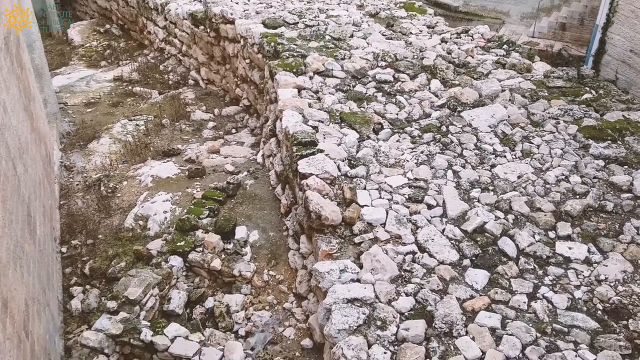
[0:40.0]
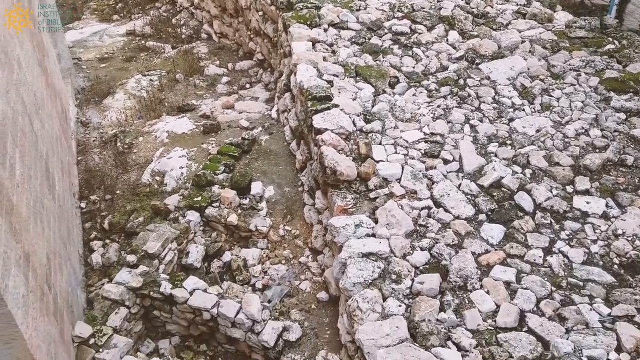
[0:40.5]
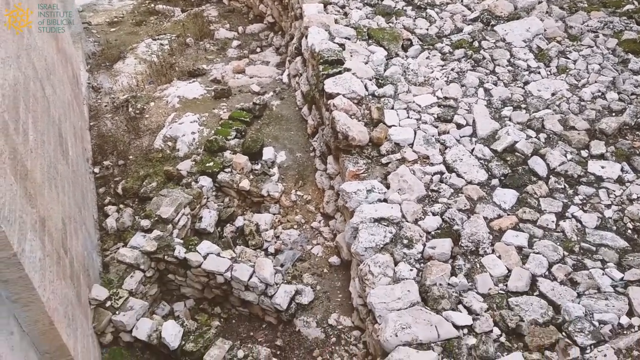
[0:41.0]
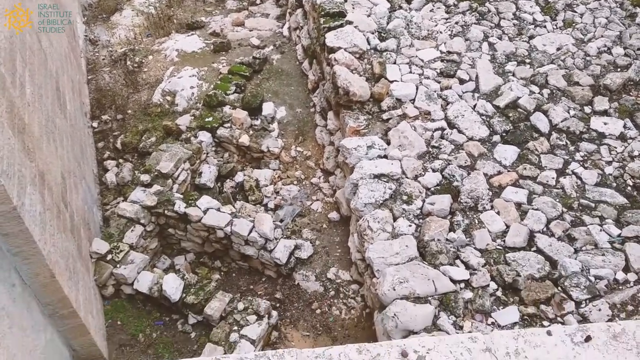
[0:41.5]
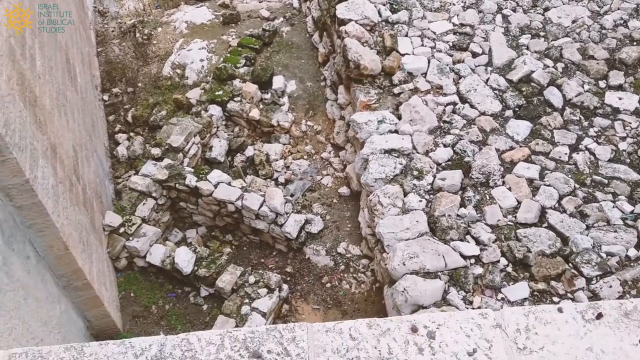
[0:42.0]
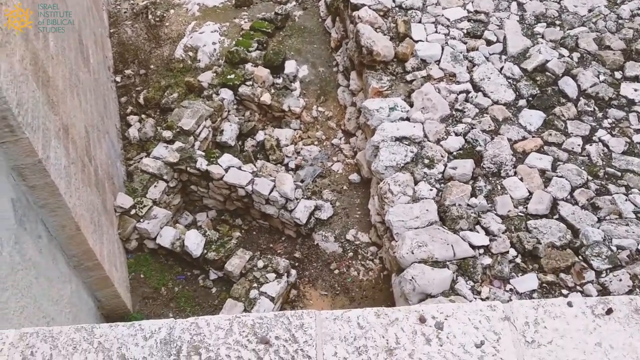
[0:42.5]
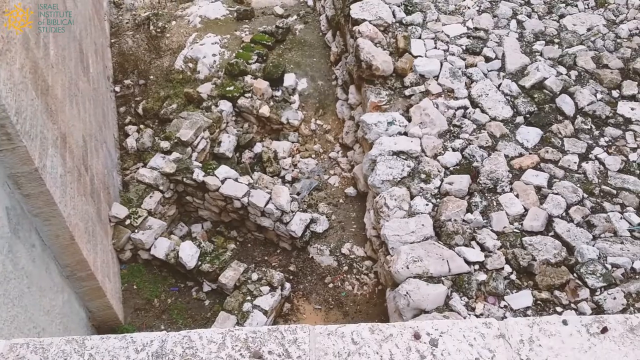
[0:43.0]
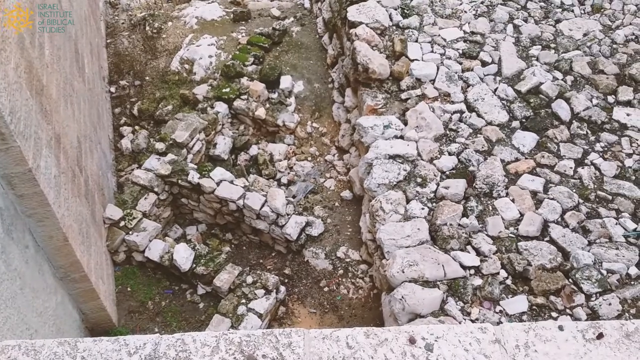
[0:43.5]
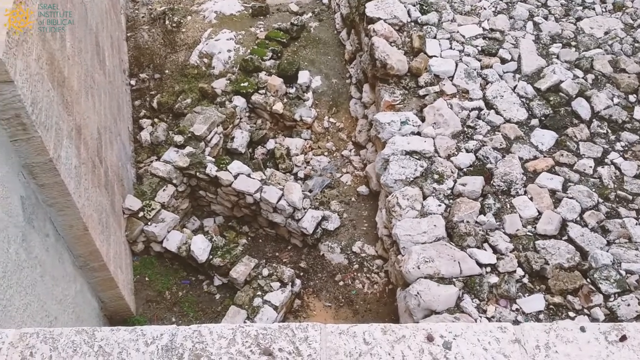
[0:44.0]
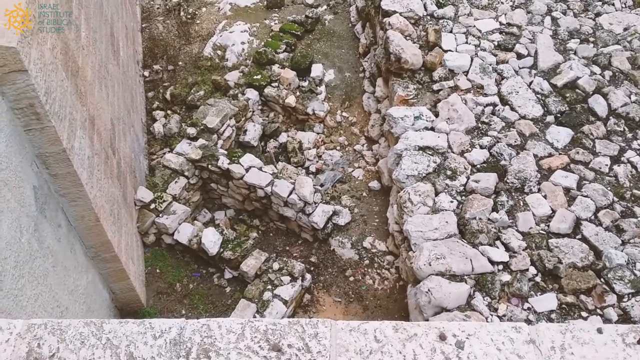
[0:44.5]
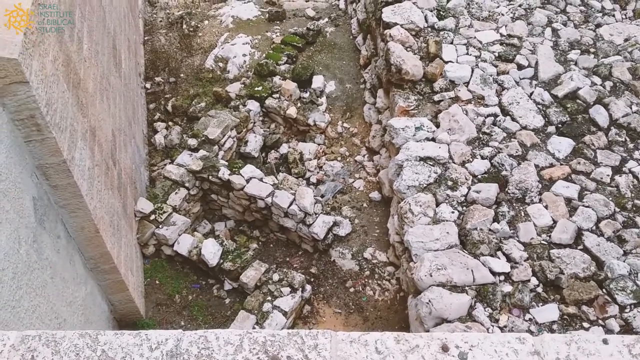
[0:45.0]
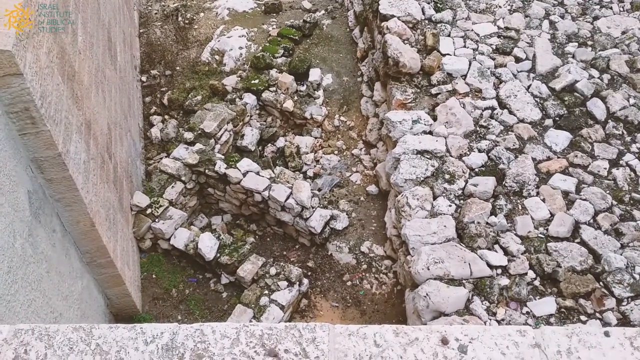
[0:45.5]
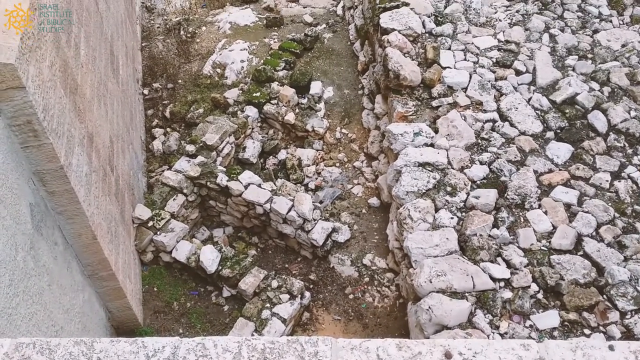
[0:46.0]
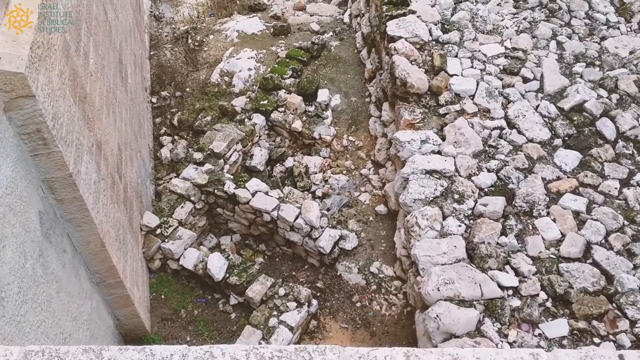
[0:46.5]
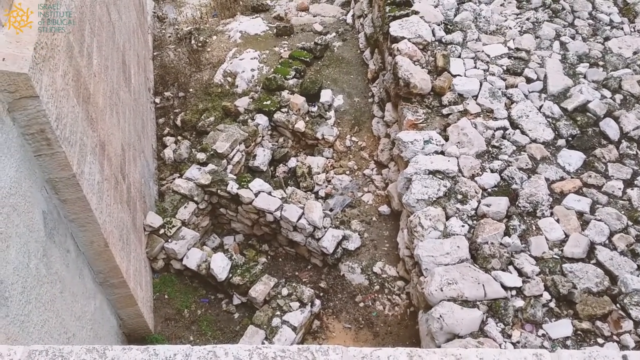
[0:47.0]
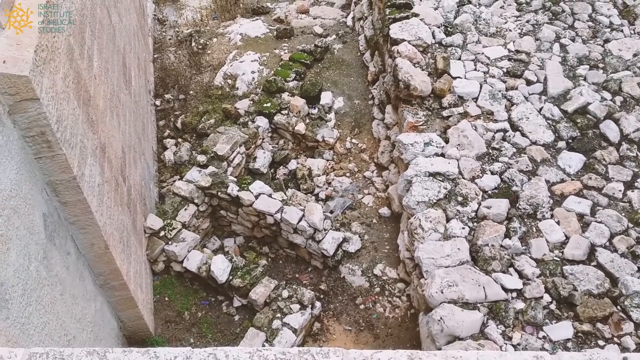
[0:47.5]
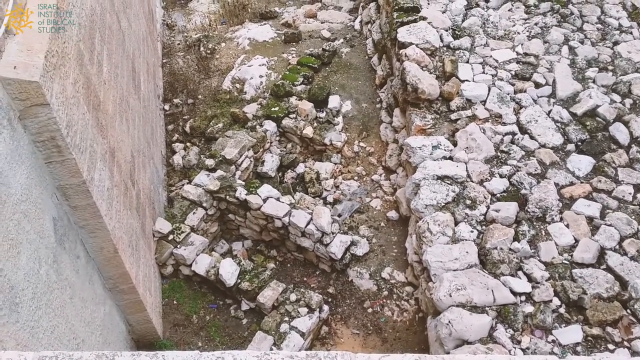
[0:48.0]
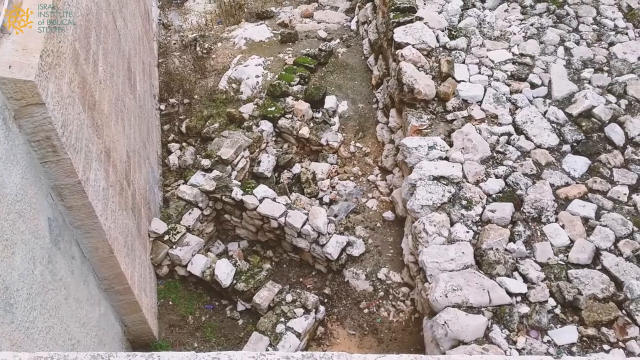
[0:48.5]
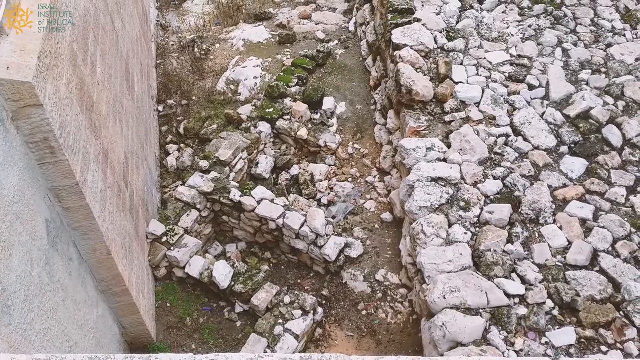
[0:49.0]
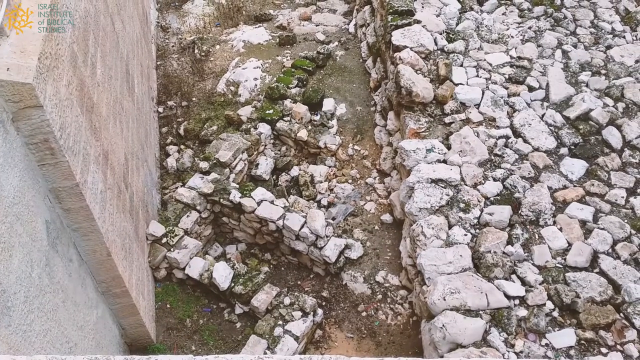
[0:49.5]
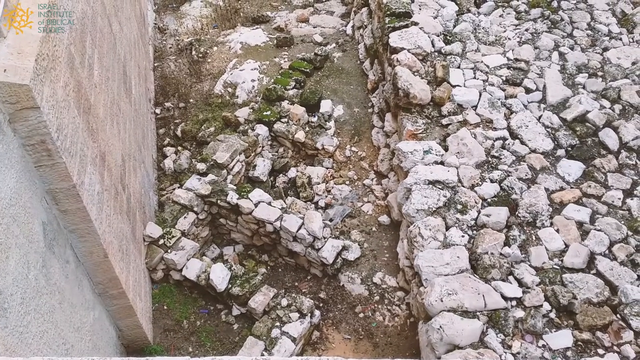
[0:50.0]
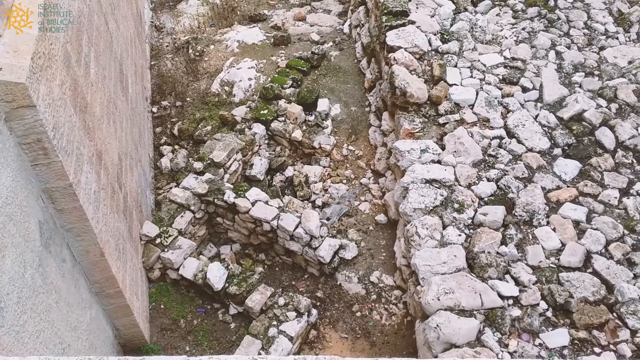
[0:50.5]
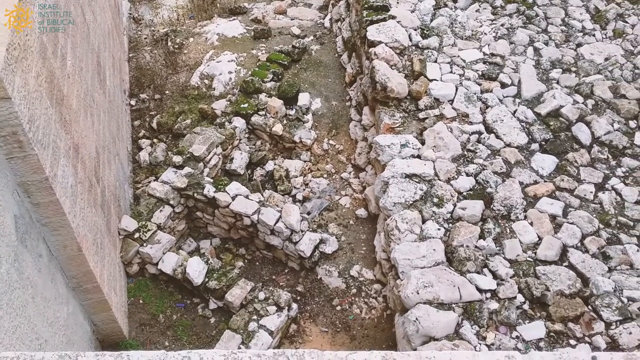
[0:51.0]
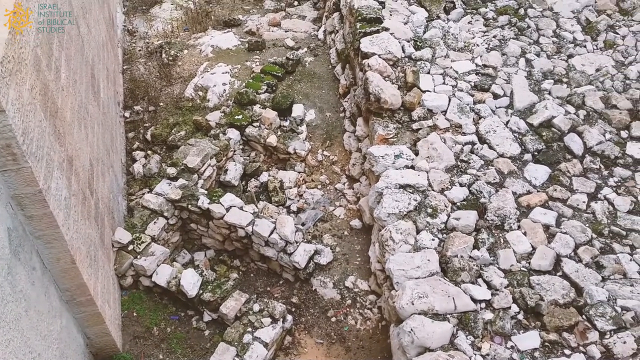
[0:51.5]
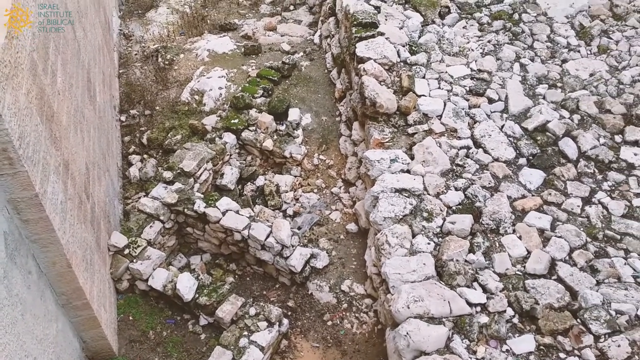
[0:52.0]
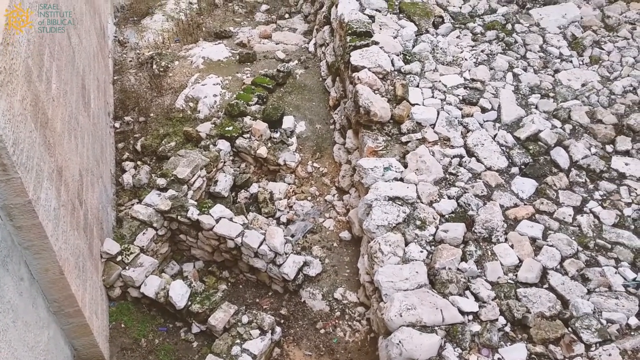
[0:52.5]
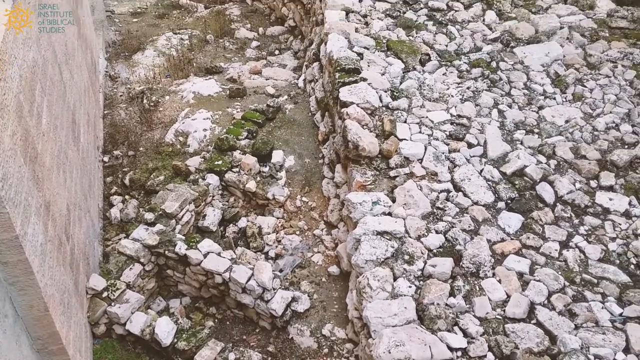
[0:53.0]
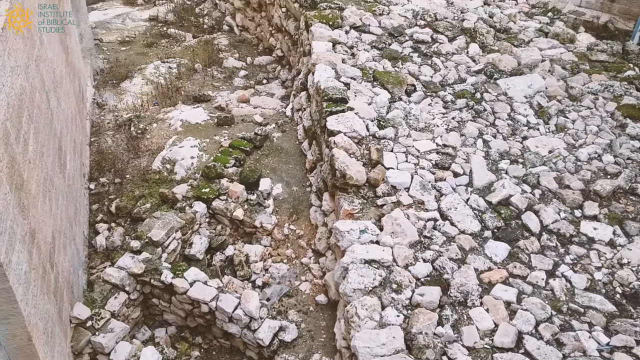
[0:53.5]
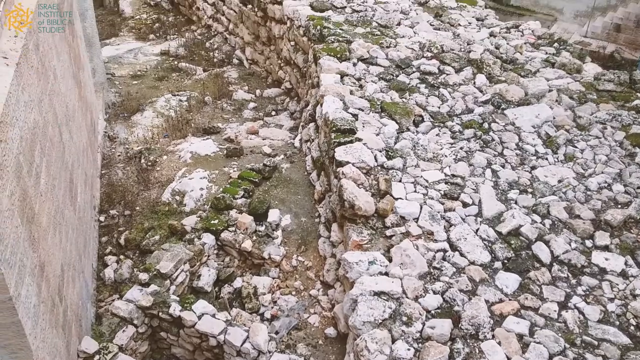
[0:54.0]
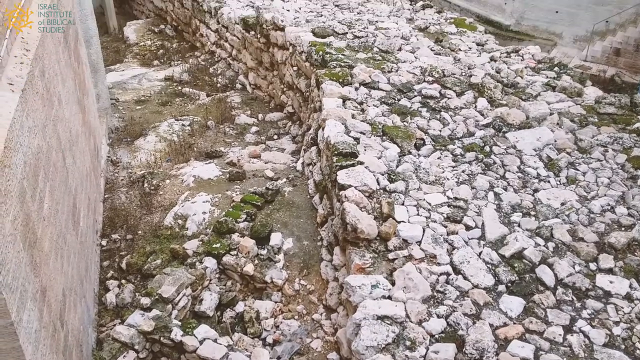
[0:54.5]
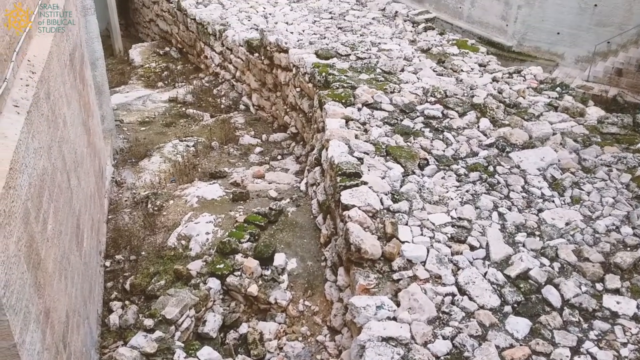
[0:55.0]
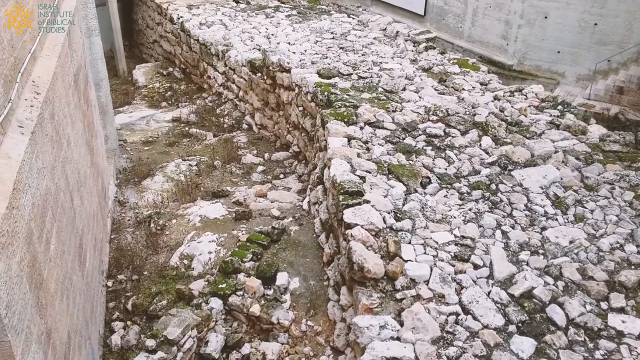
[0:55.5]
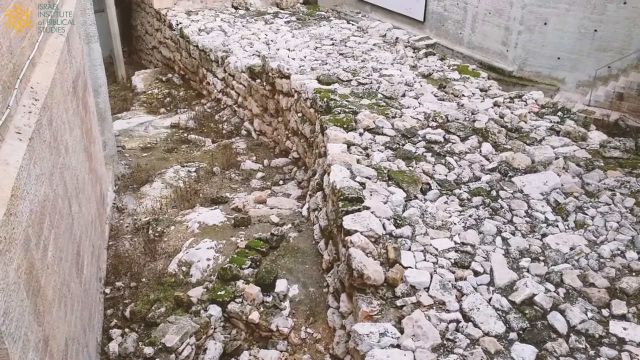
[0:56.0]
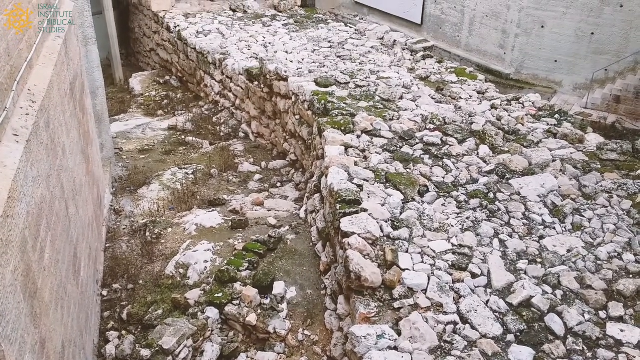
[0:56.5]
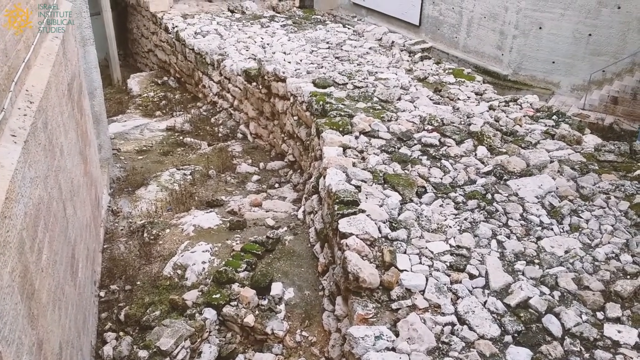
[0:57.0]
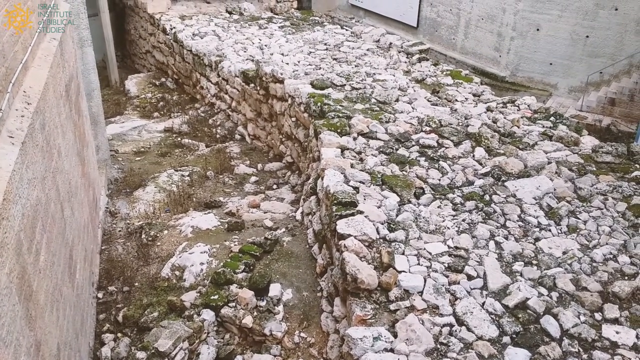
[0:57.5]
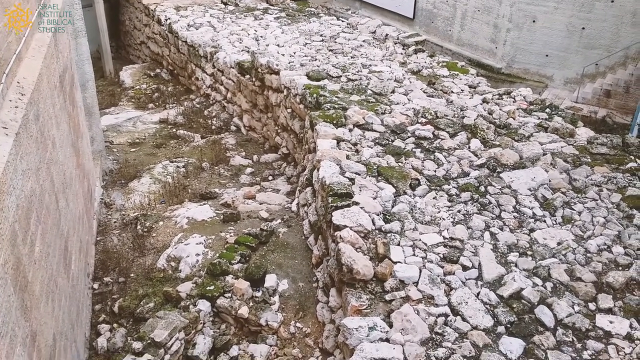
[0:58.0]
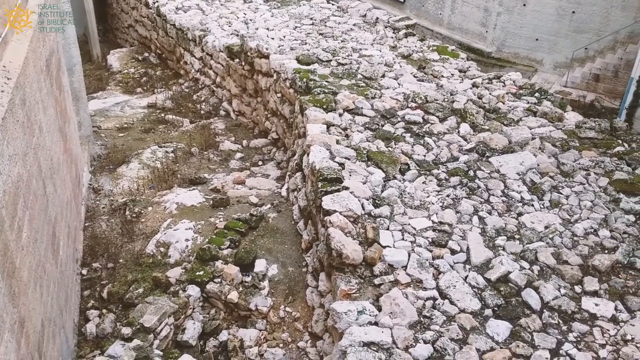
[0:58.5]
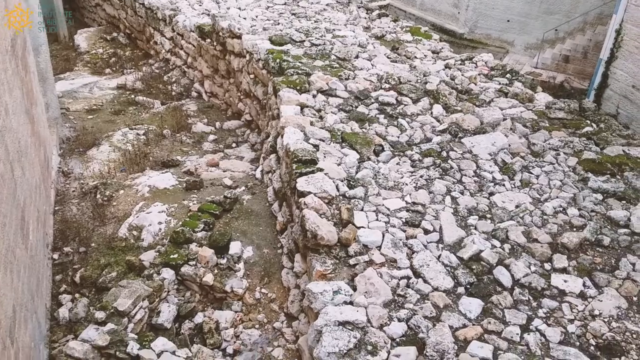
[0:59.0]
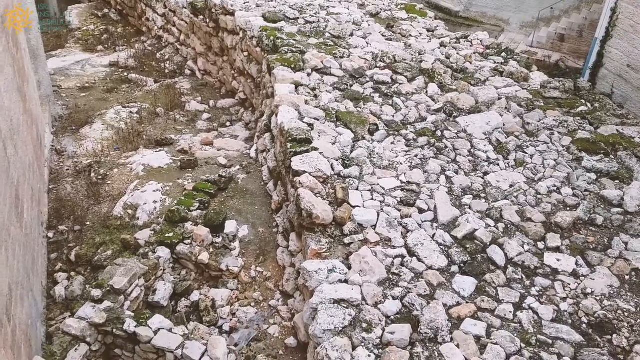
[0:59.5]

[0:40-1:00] Another view shows the stone, which is kind of in a hole under the overpass and at the bottom of a staircase, kind of in the middle of a city. It is sort of a raised bed, grassy type area, but it is not really grass because it is covered with stone. The ground is very unlevel, with stones of all different shapes and sizes. The stone looks like it might be left over from some sort of project and never cleaned up.